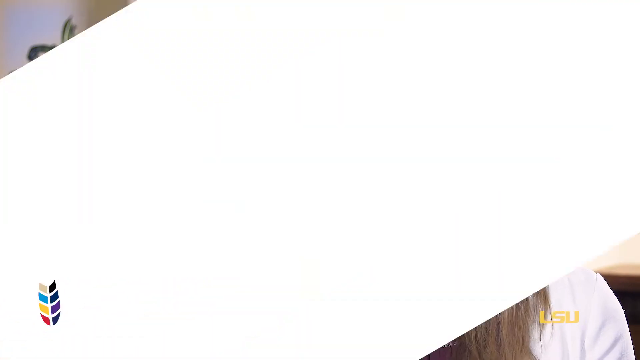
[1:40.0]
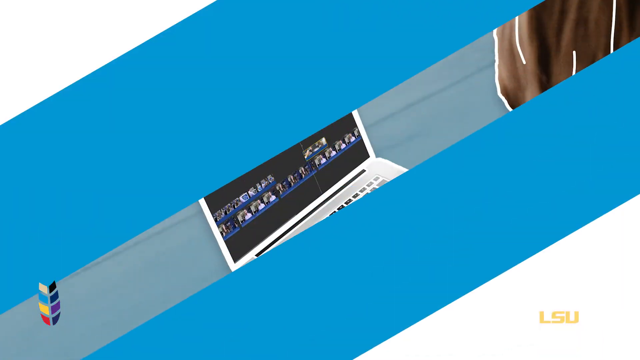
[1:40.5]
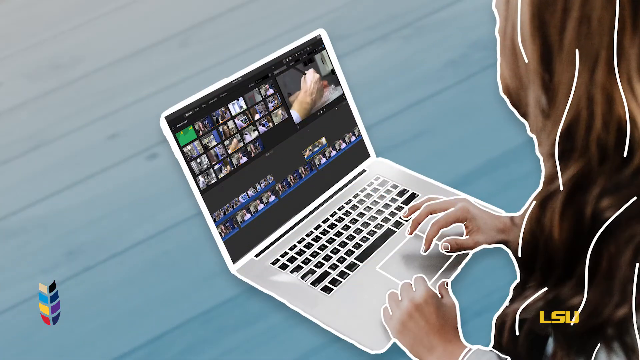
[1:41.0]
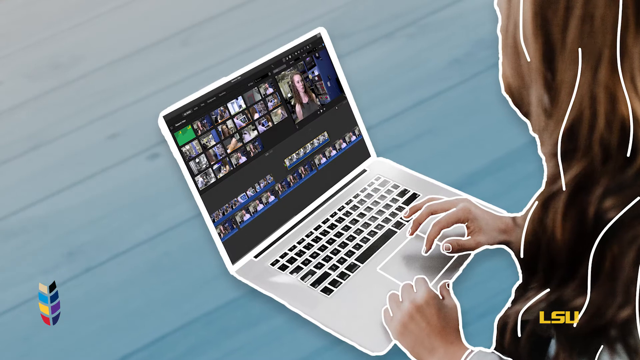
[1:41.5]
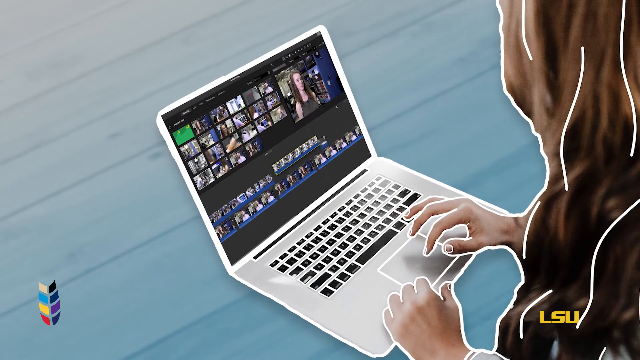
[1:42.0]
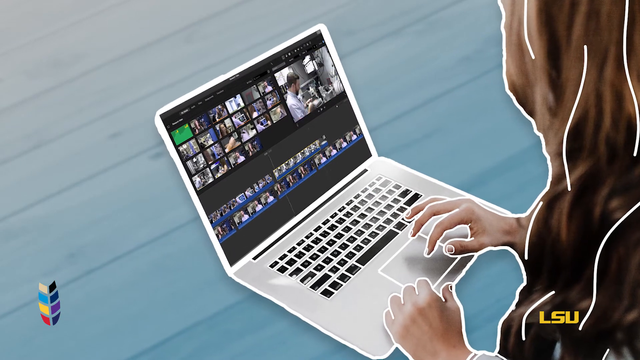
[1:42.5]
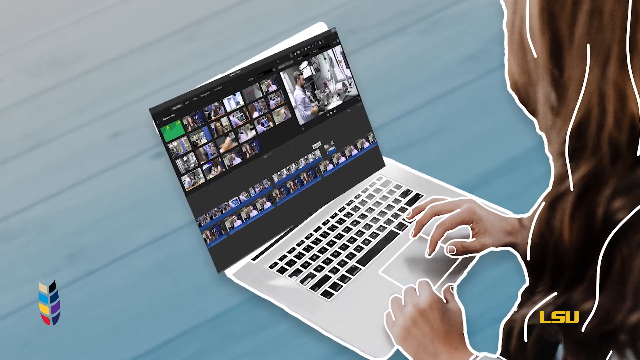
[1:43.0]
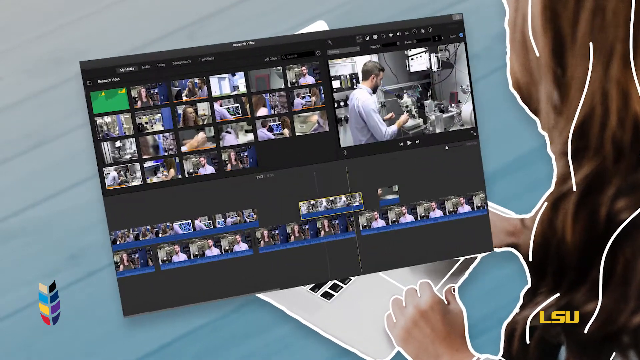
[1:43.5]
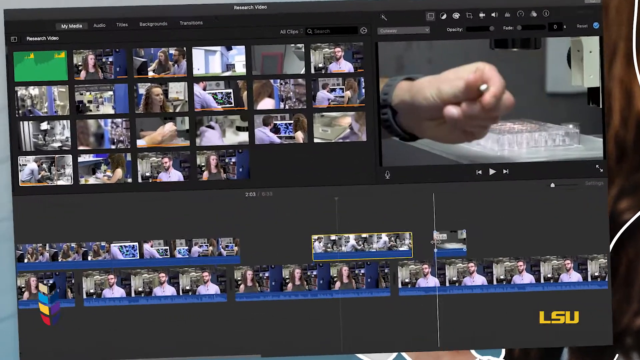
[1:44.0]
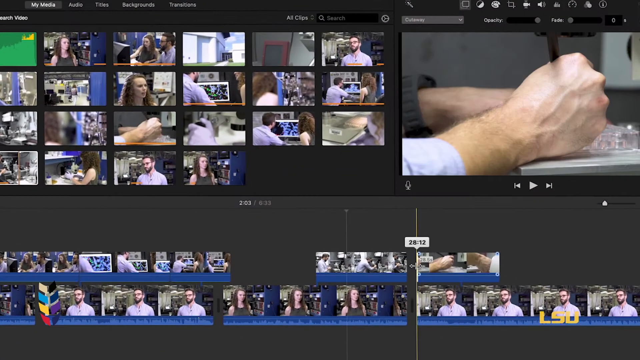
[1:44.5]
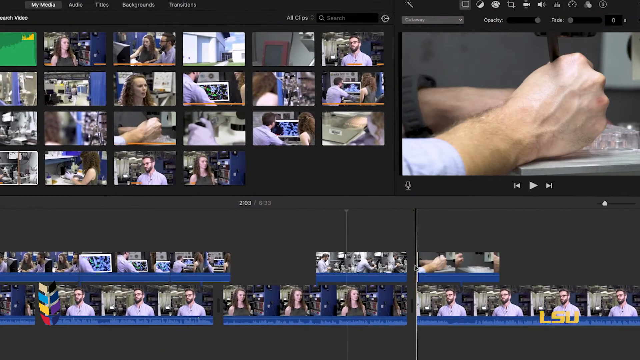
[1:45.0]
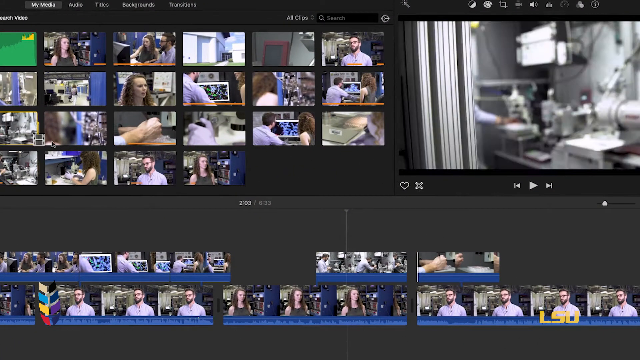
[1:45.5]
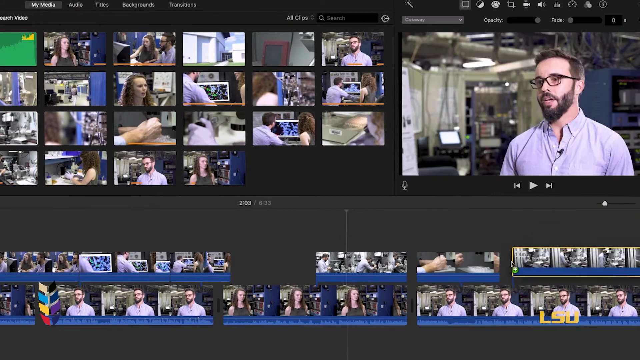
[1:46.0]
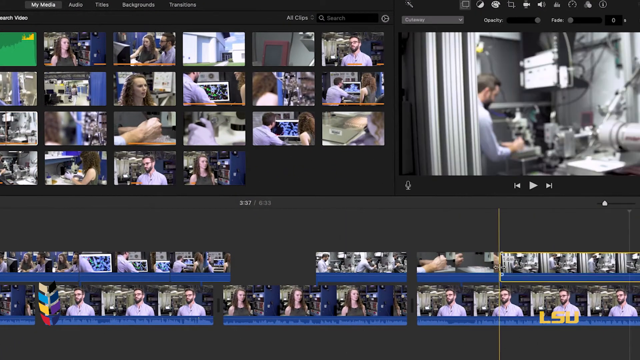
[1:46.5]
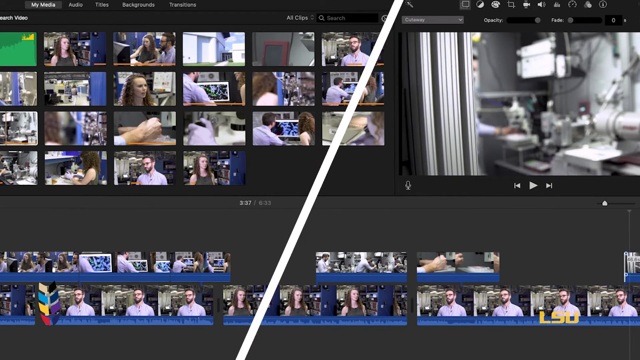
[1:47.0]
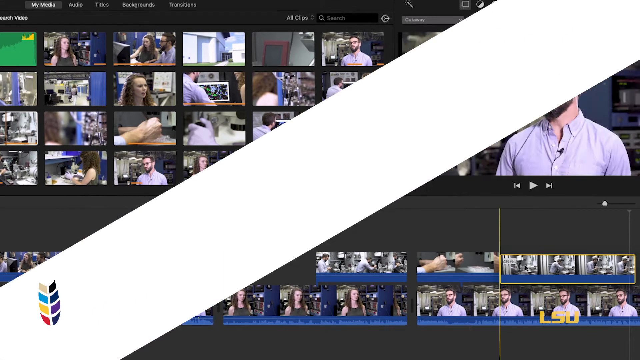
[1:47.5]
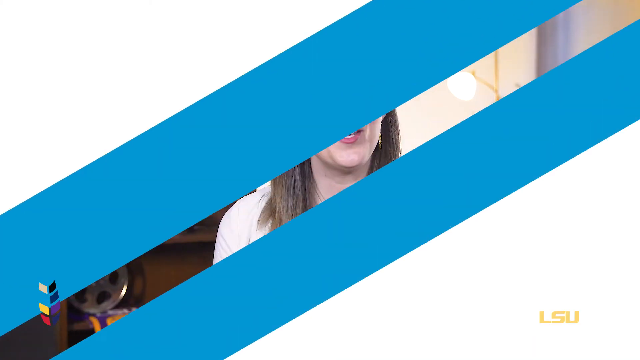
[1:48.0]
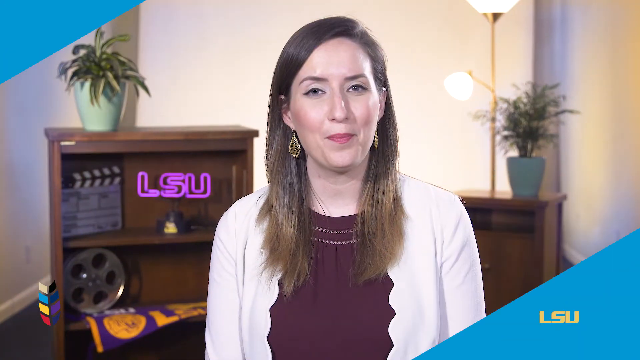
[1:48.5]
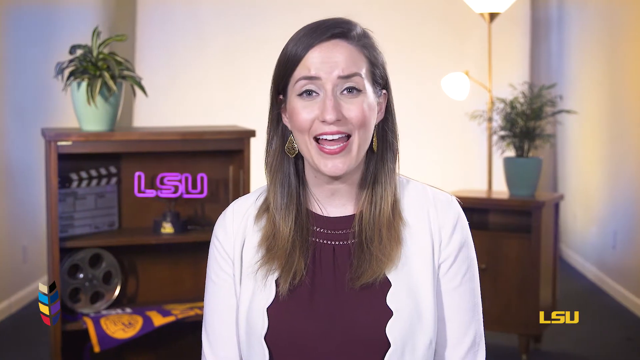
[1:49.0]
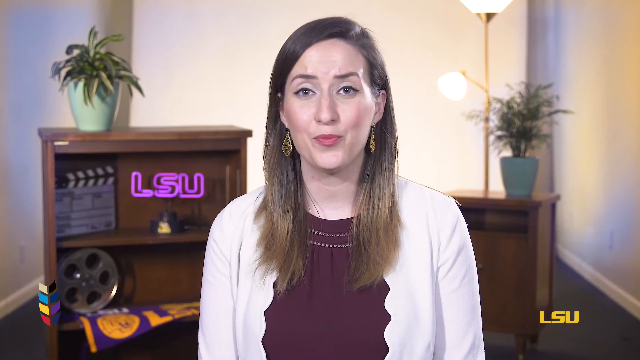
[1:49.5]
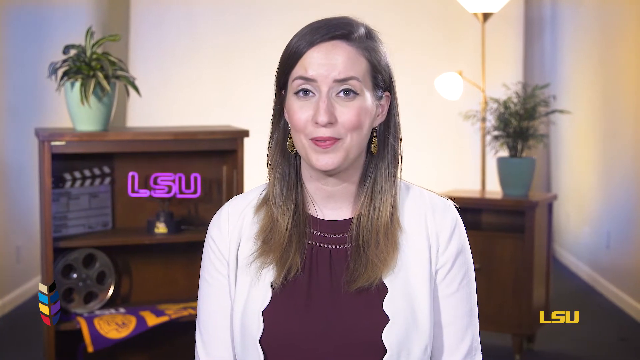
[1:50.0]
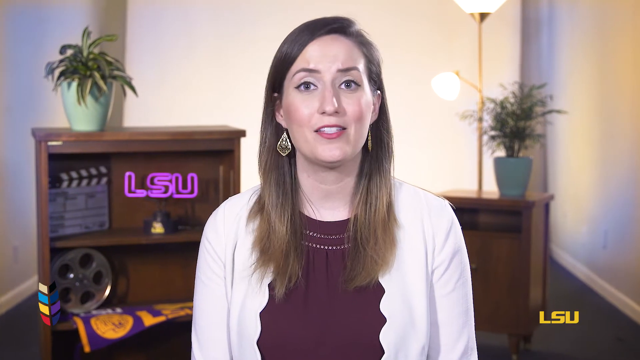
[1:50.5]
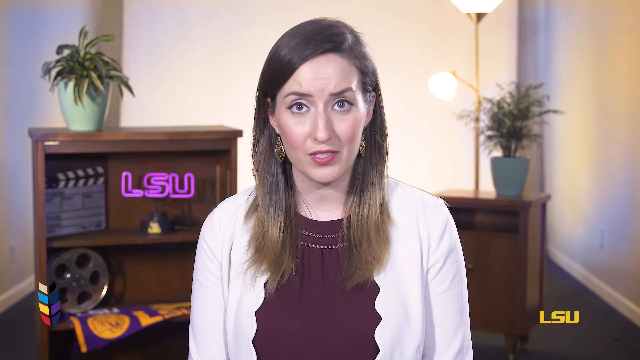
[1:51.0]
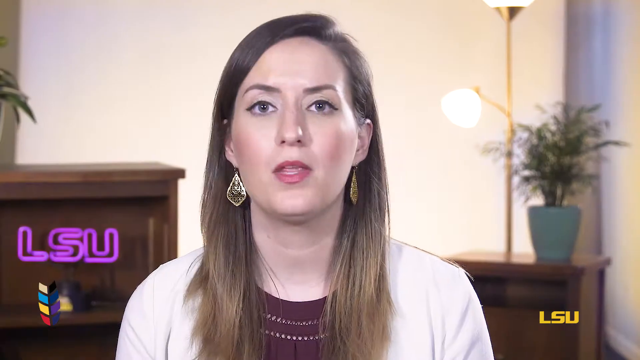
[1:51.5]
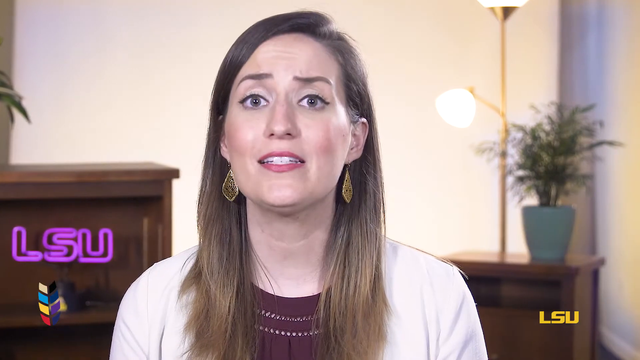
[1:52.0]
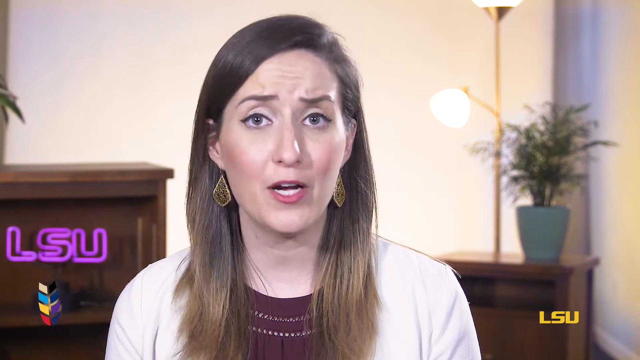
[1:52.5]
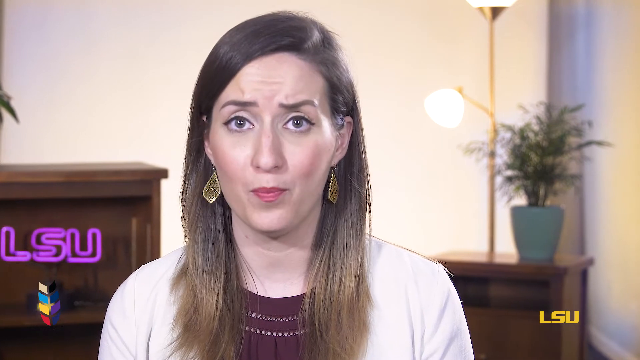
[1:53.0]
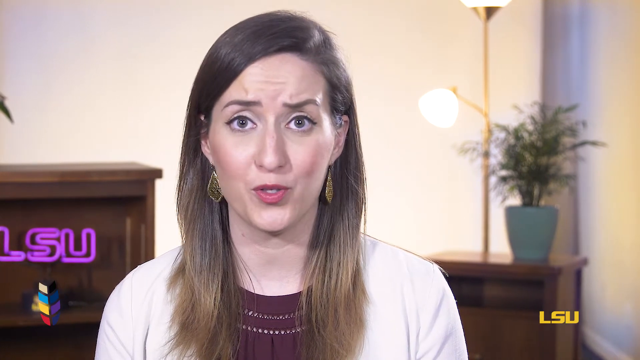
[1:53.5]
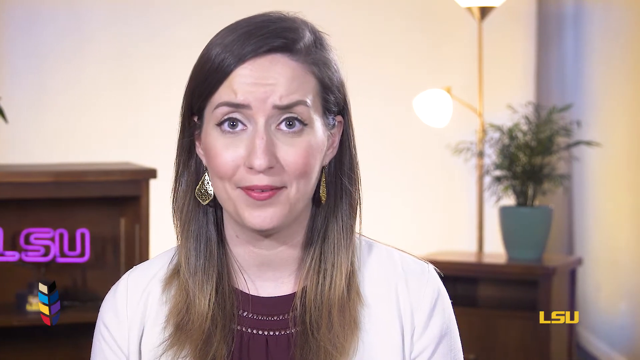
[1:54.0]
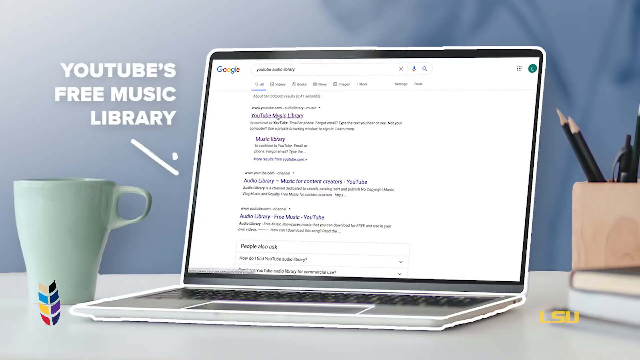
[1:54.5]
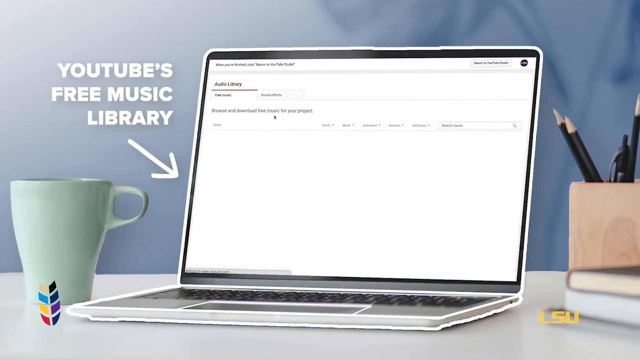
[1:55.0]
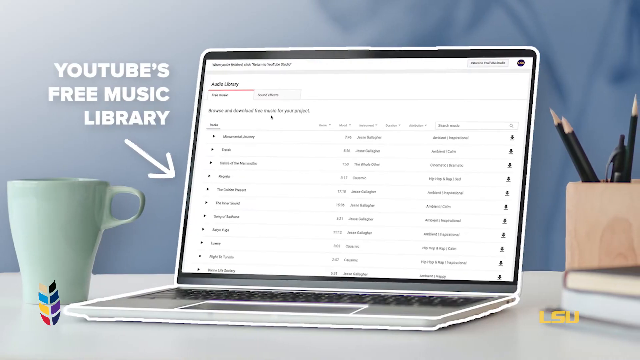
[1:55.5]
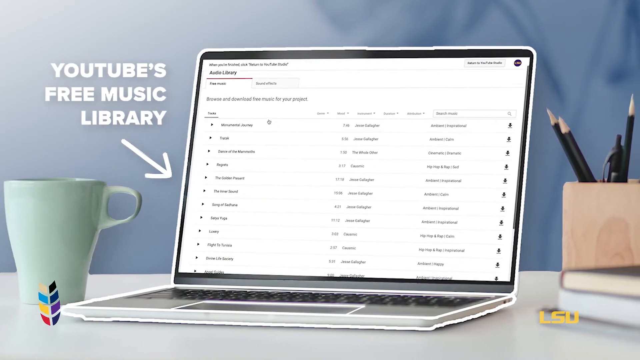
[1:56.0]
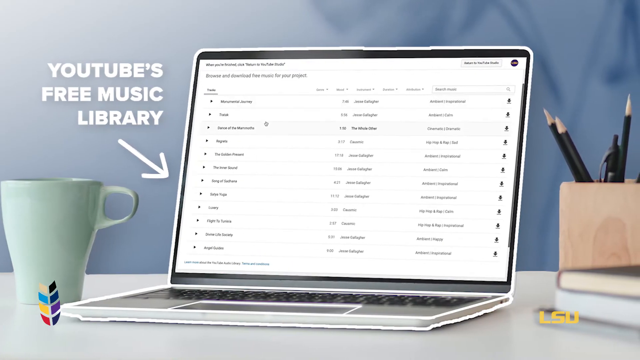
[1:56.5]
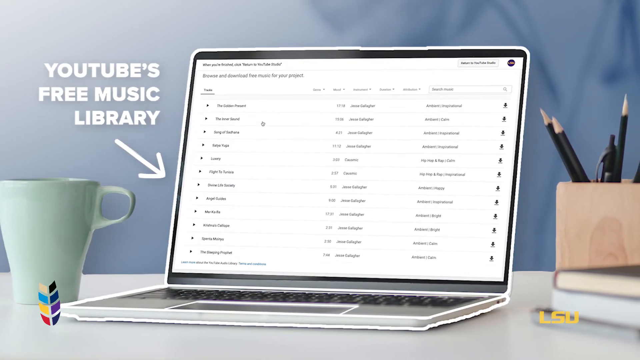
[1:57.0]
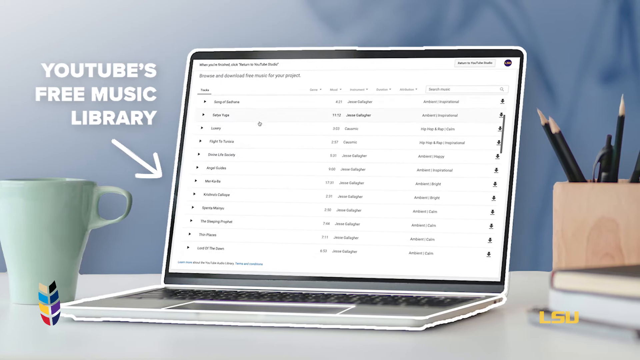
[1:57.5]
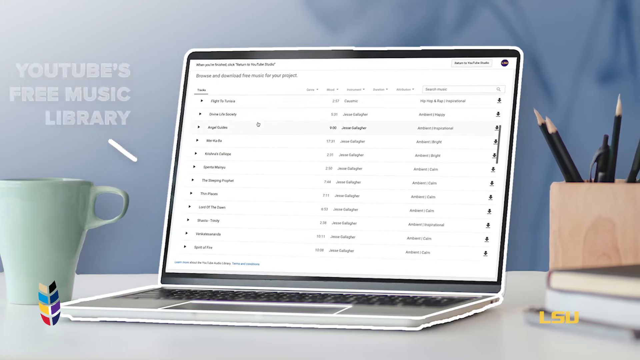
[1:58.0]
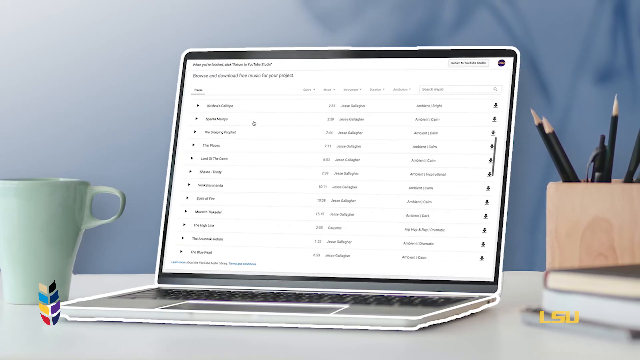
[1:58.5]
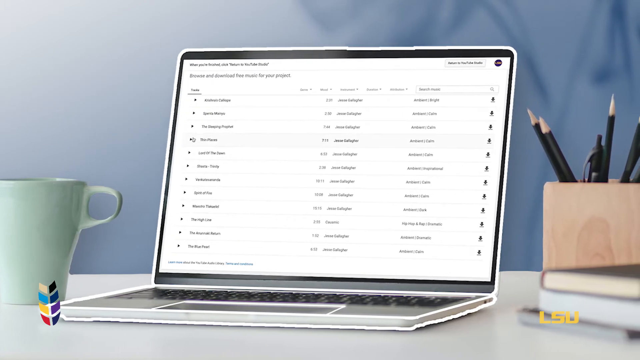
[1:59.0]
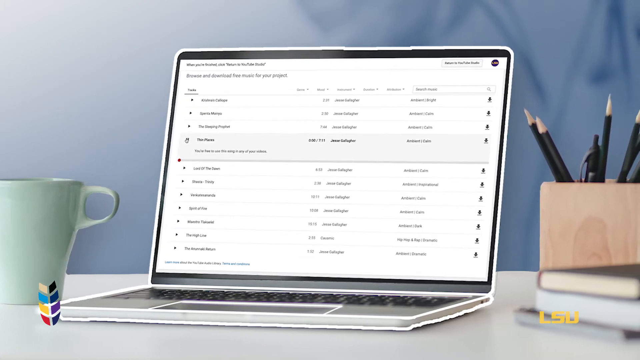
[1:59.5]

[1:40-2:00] A person is typing on a computer, and the video cuts to a zoom in on the screen, where it looks like they are using some type of video editing software. It cuts to the narrator, a white woman in a burgundy blouse and white cardigan, and zooms in on her. It then cuts to a laptop scrolling through a list of things. Behind the narrator is a bookcase with a neon sign with the letters "LSU" and a couple of items found on a movie set, a clapboard and a reel from a projector. There are potted plants on each of the bookcases behind her, and a purple and gold pennant, most likely from LSU.